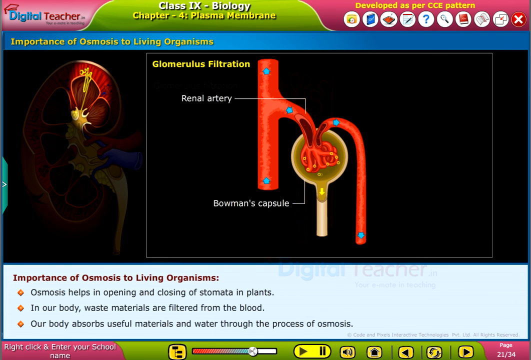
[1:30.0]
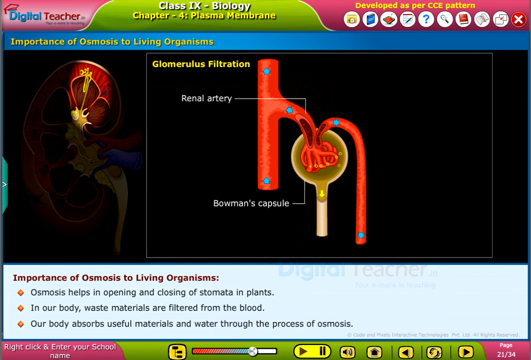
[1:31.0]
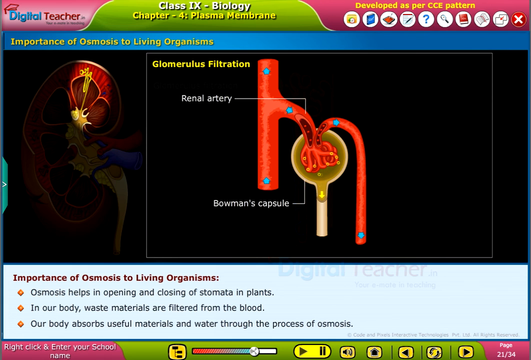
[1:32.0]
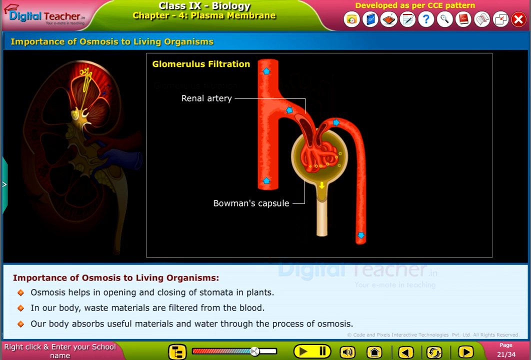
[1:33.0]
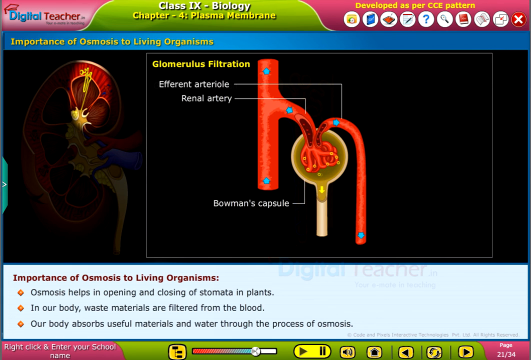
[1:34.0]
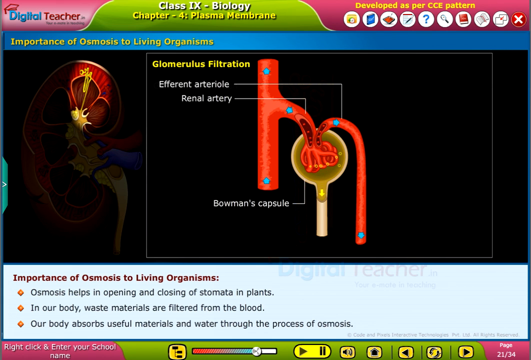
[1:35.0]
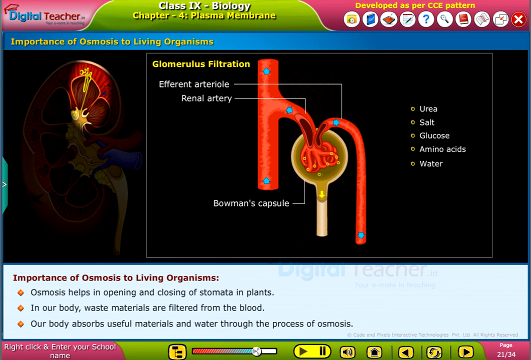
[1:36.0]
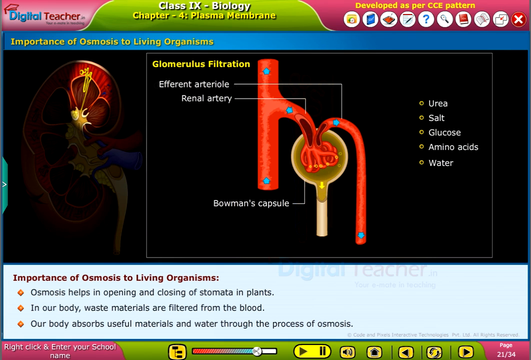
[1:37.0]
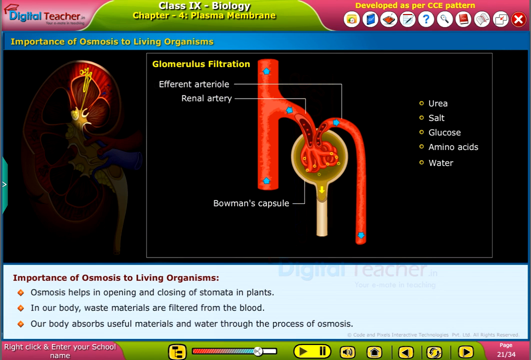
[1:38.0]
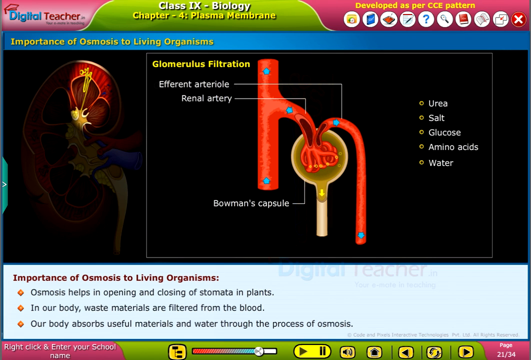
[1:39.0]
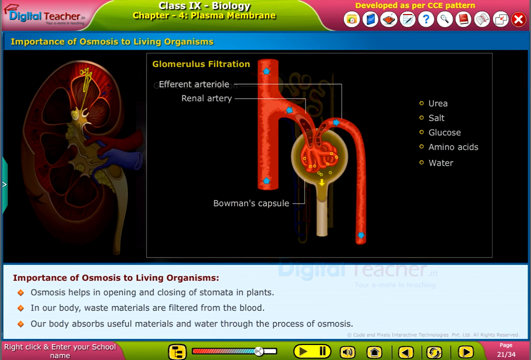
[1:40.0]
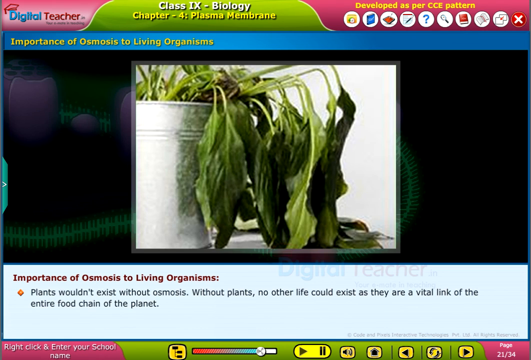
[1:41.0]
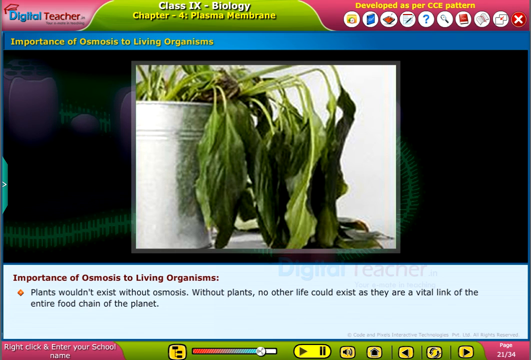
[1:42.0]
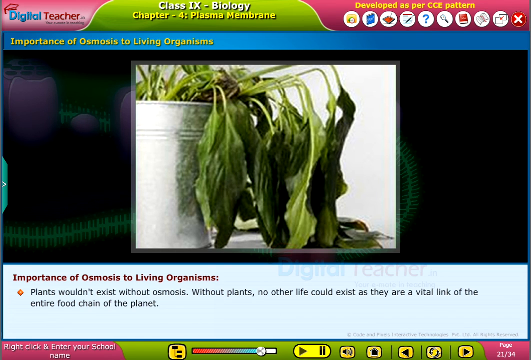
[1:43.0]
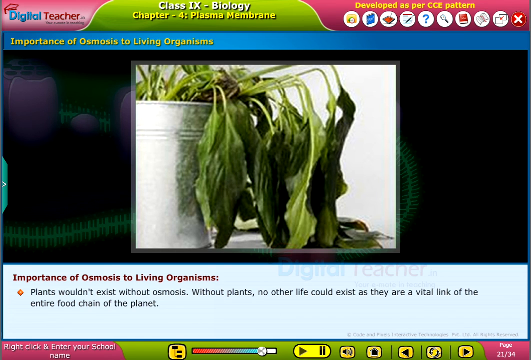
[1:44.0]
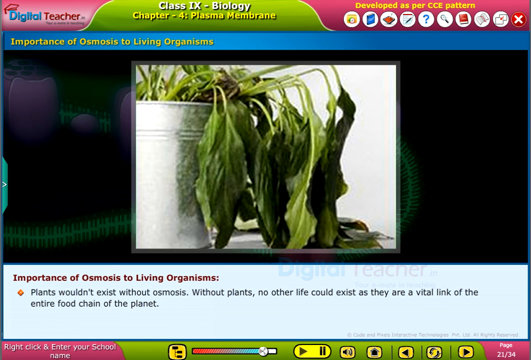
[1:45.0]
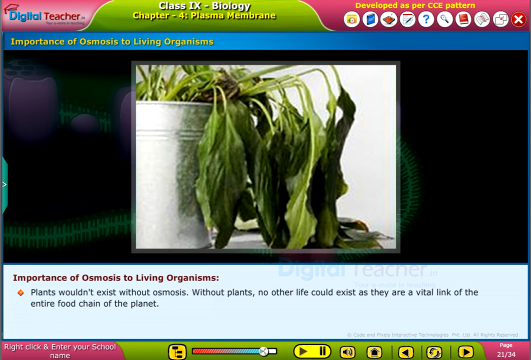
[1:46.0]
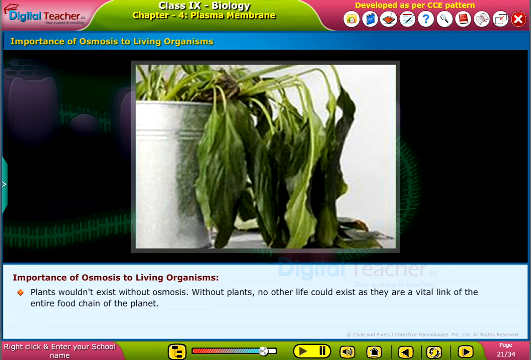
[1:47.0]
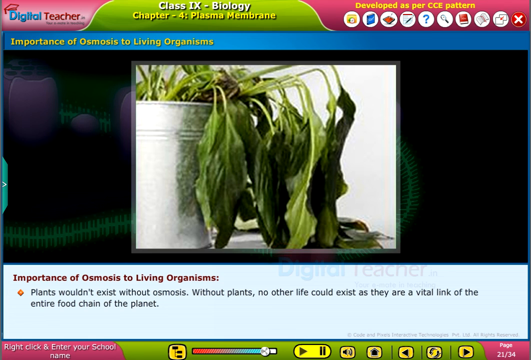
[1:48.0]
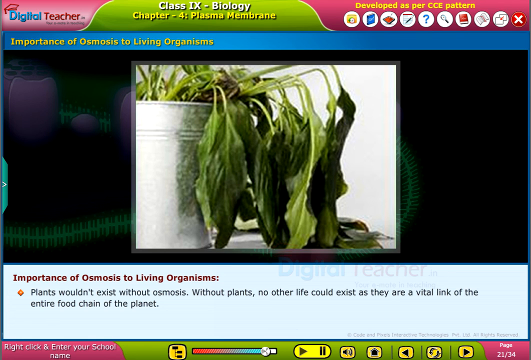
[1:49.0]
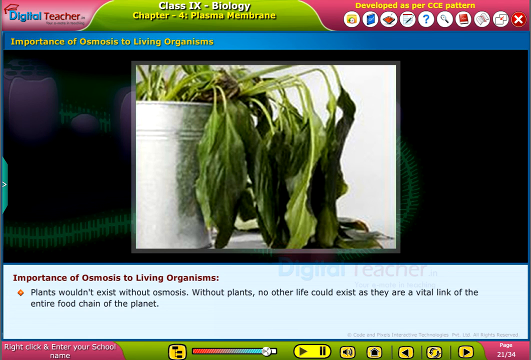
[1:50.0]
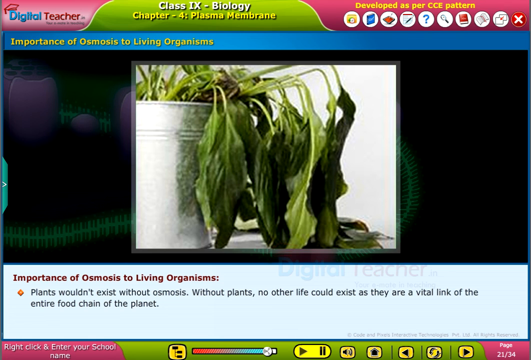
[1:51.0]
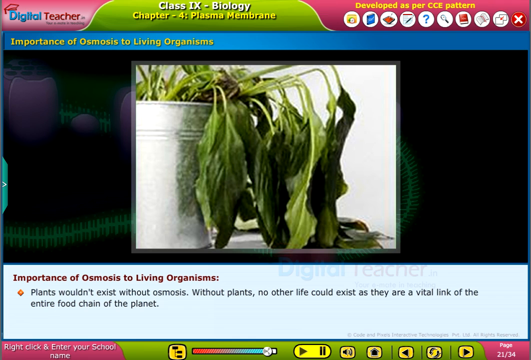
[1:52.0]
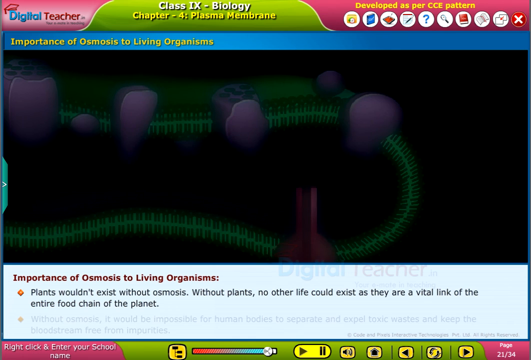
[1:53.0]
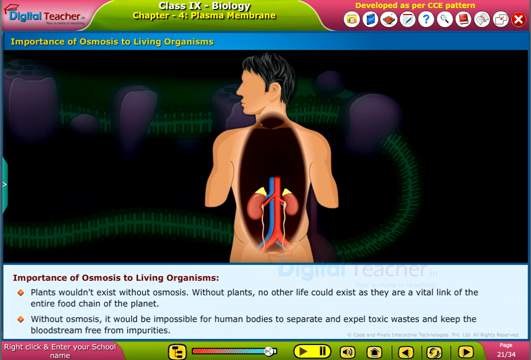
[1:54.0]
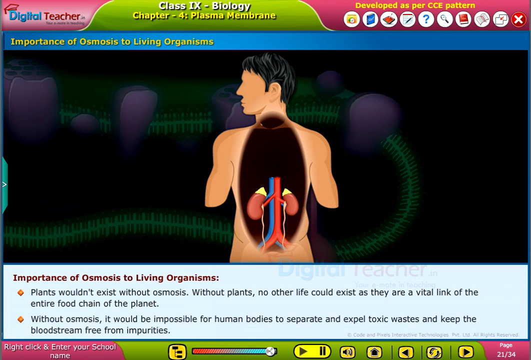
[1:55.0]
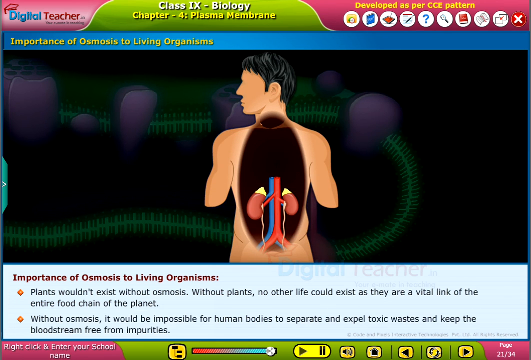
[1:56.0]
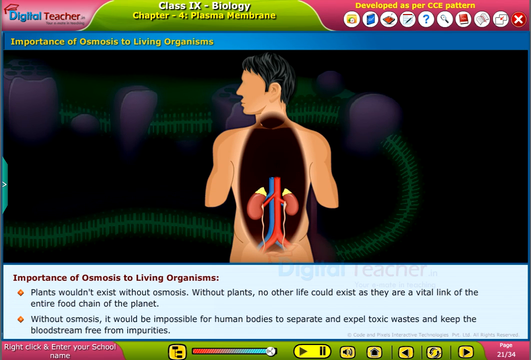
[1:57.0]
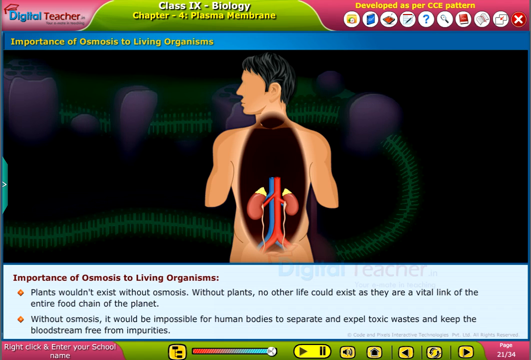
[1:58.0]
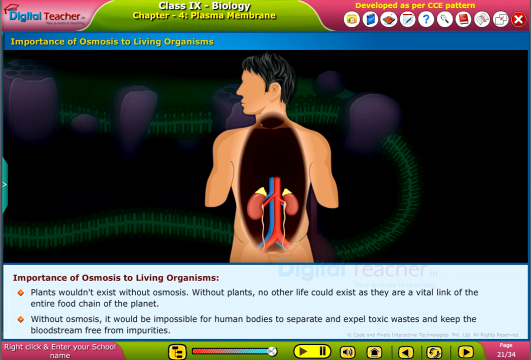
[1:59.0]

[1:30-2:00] The screen, Class IX Biology, Chapter 4, Plasma Membrane, shows a filtration system involving the efferent arteriole, the renal artery, and the Bowman's capsule, through which urea, salt, glucose, amino acids, and water are filtered. The information states that plants could not exist without osmosis and that it is vital to keeping the food chain active. One picture shows a leafy plant in a silver bucket, and the plant is dead. The next picture shows a pale human body with black hair, illustrating the human process of living, with the point that without osmosis humans could not expel toxic waste and keep the bloodstream free from impurities.